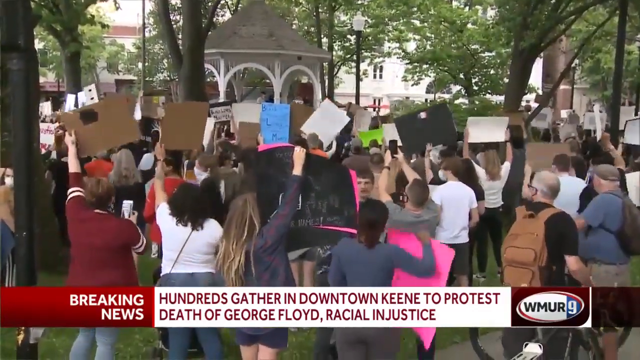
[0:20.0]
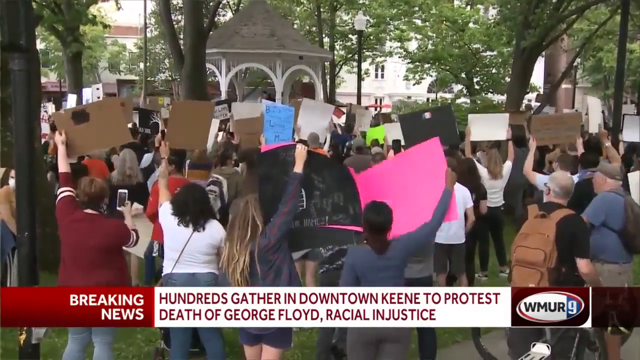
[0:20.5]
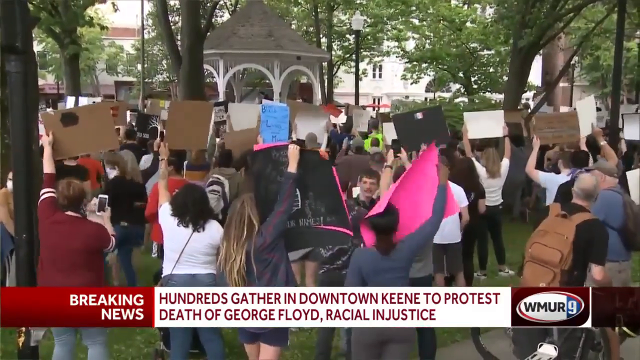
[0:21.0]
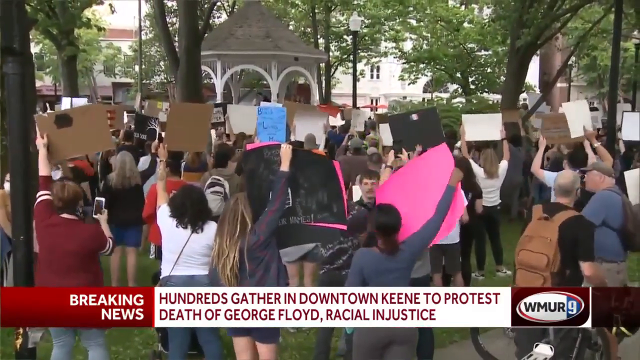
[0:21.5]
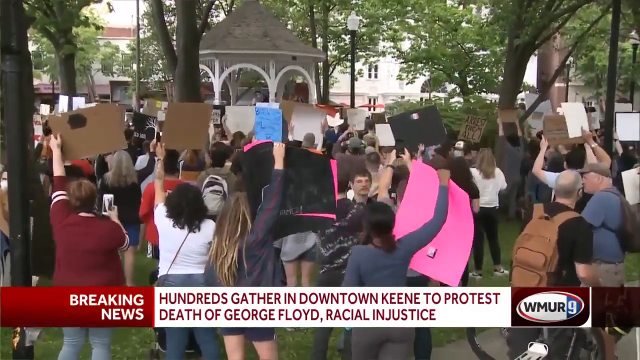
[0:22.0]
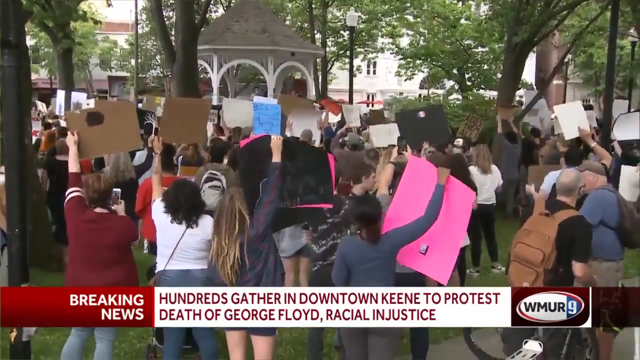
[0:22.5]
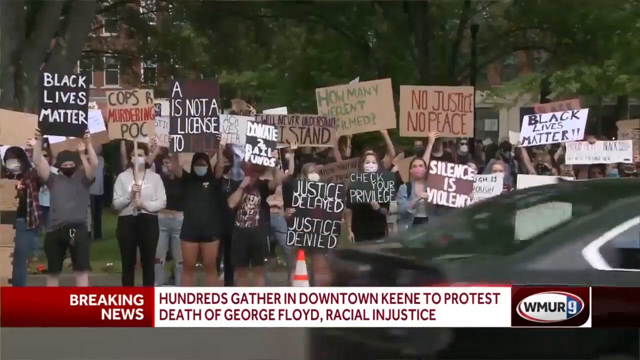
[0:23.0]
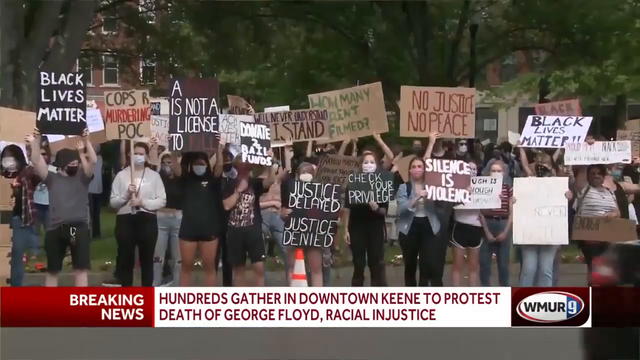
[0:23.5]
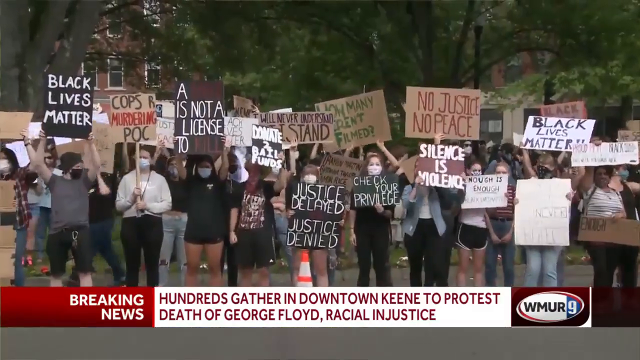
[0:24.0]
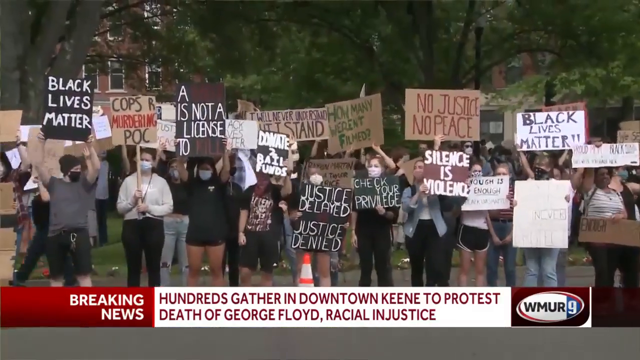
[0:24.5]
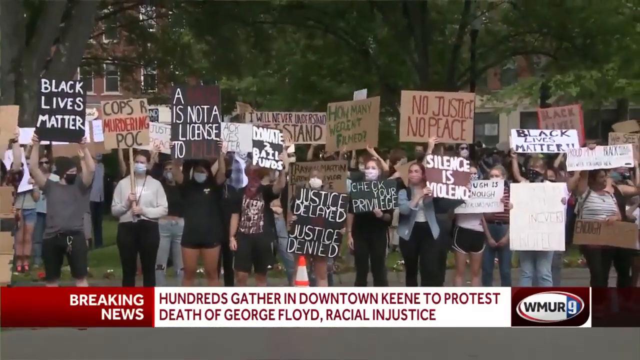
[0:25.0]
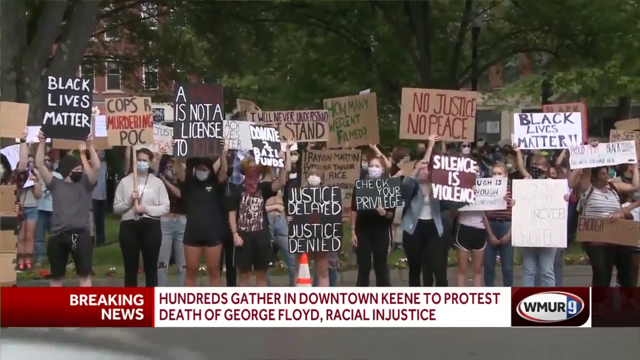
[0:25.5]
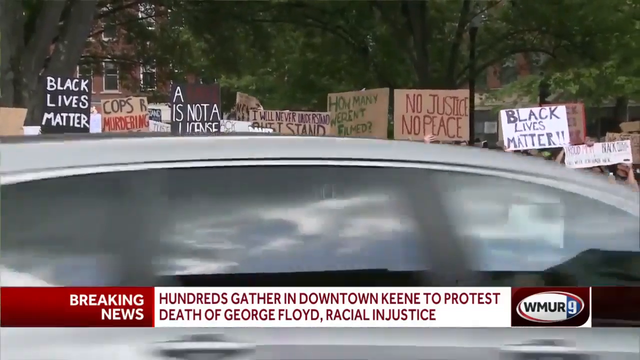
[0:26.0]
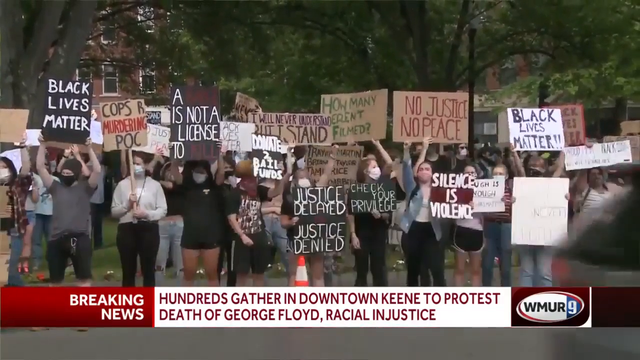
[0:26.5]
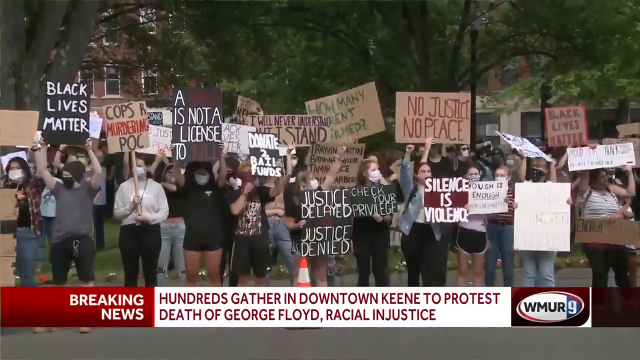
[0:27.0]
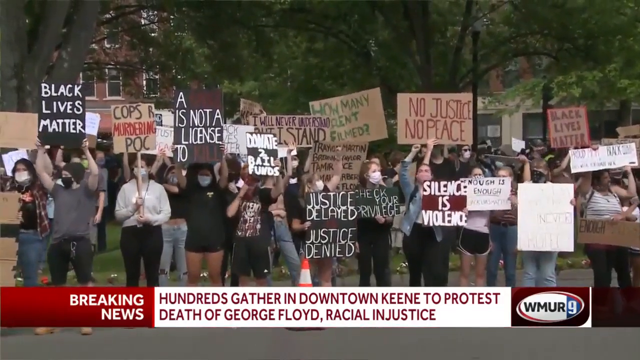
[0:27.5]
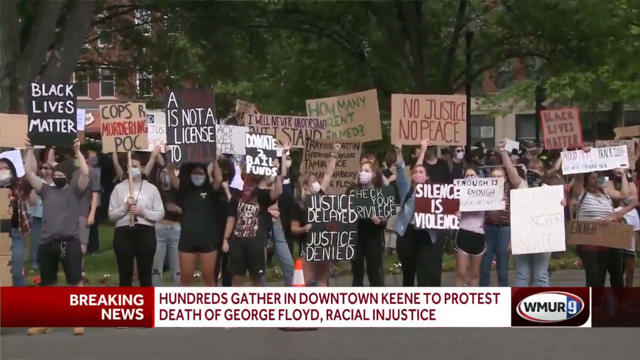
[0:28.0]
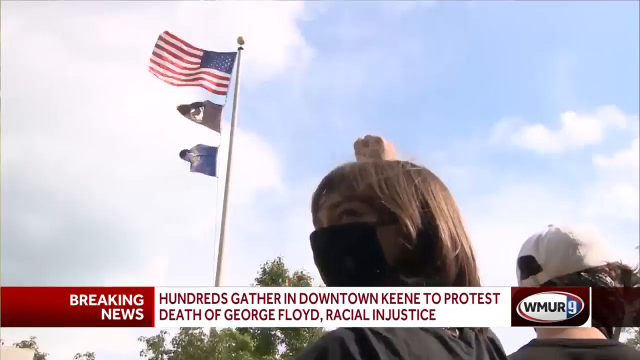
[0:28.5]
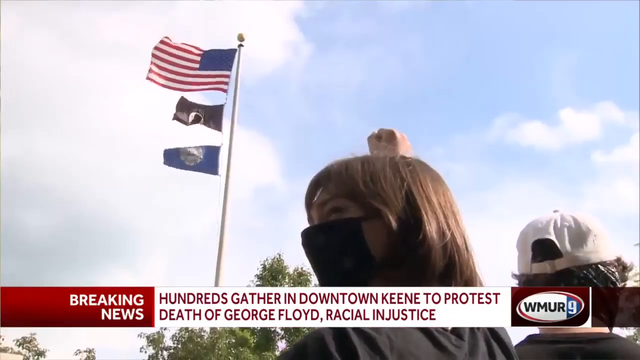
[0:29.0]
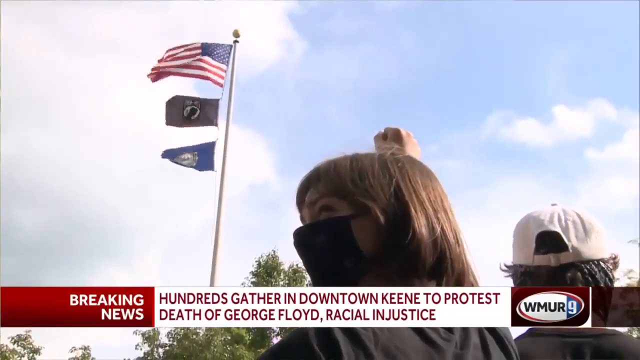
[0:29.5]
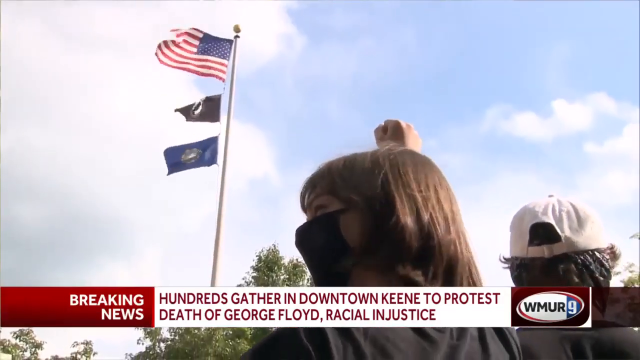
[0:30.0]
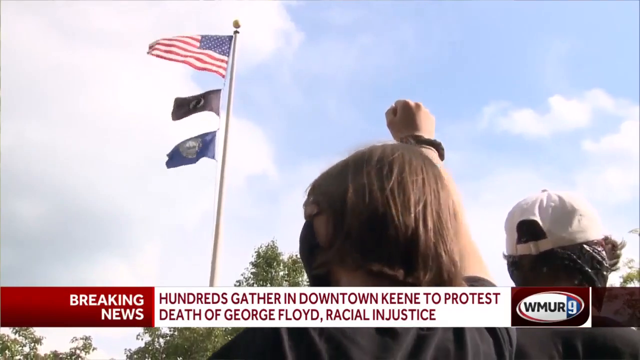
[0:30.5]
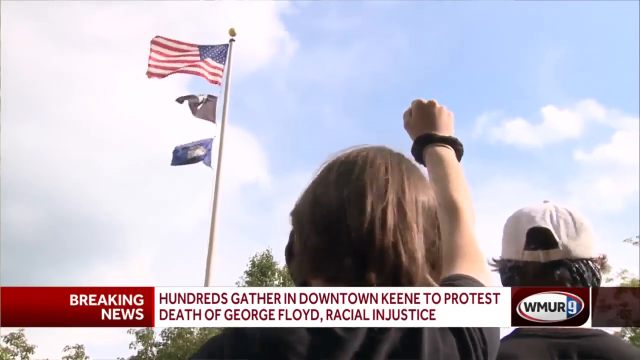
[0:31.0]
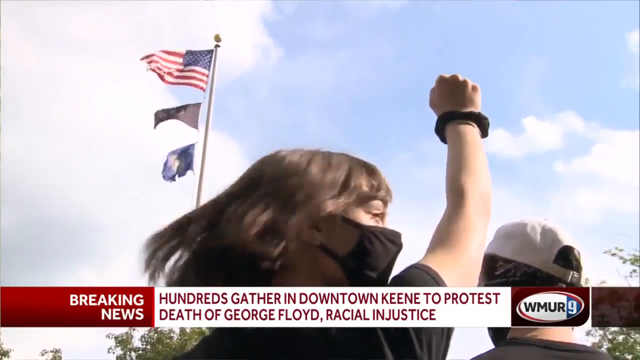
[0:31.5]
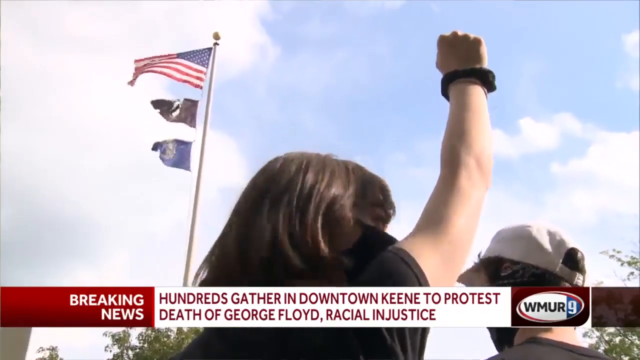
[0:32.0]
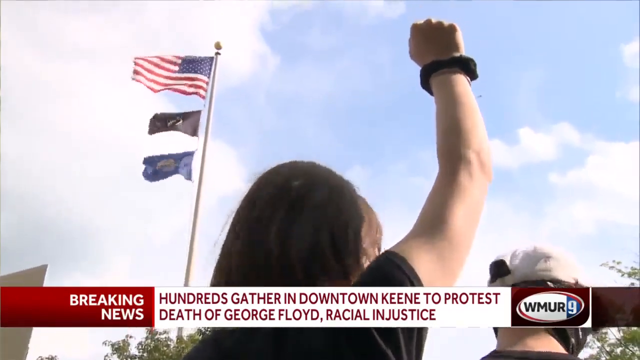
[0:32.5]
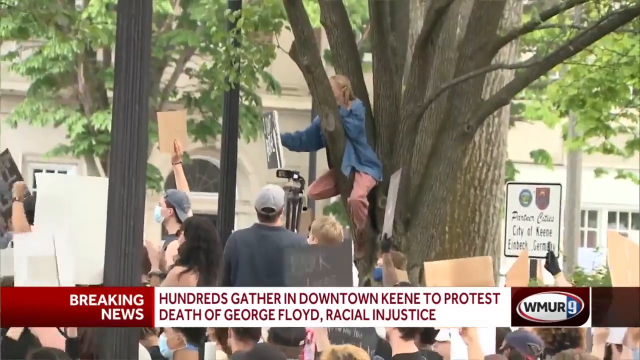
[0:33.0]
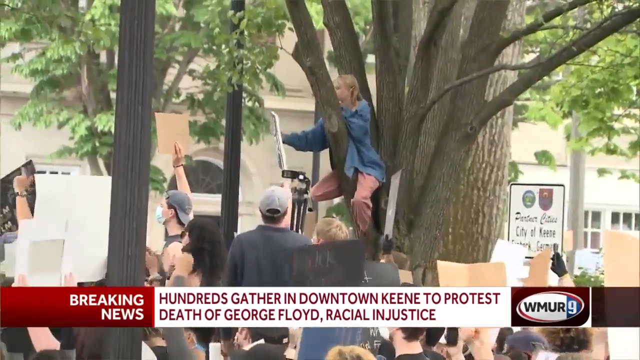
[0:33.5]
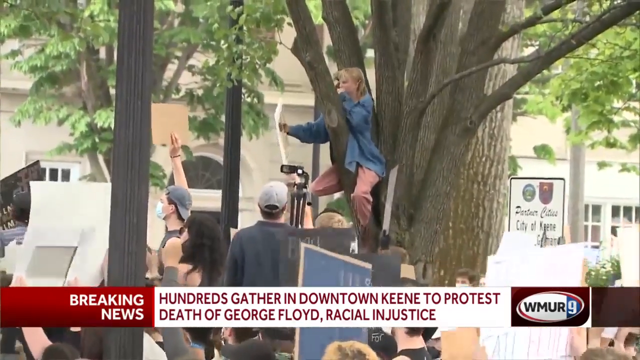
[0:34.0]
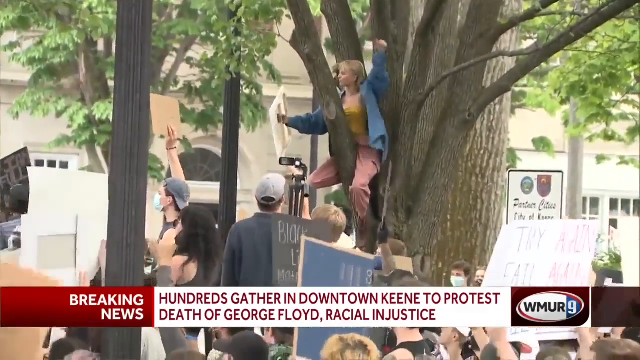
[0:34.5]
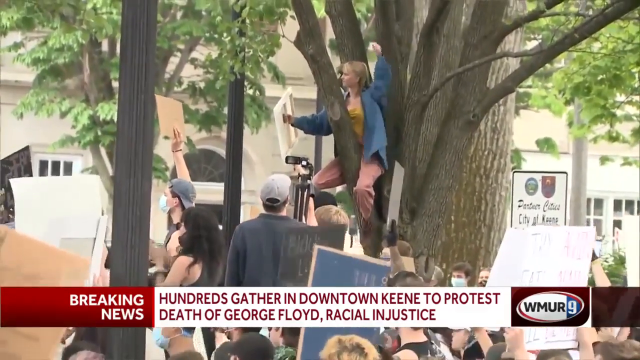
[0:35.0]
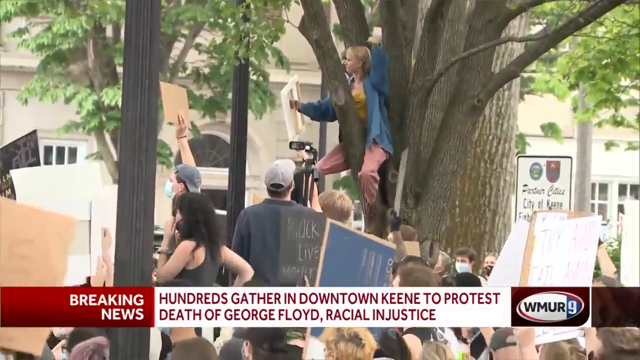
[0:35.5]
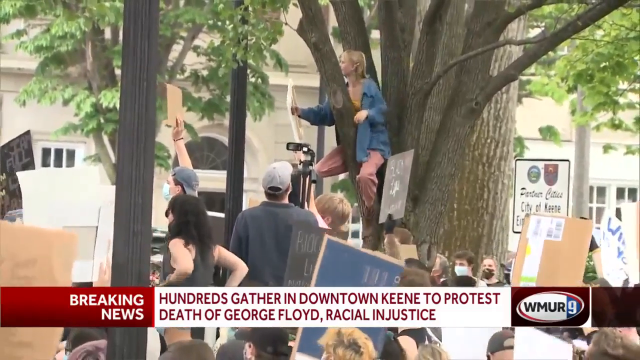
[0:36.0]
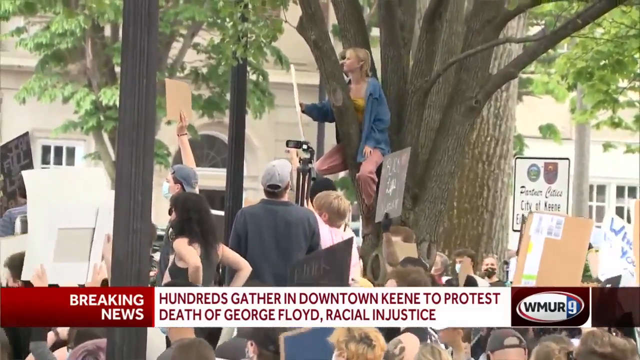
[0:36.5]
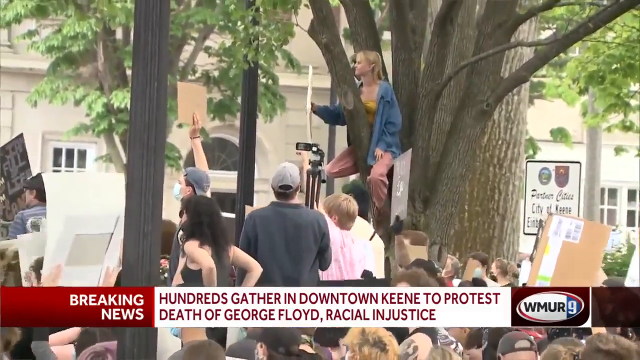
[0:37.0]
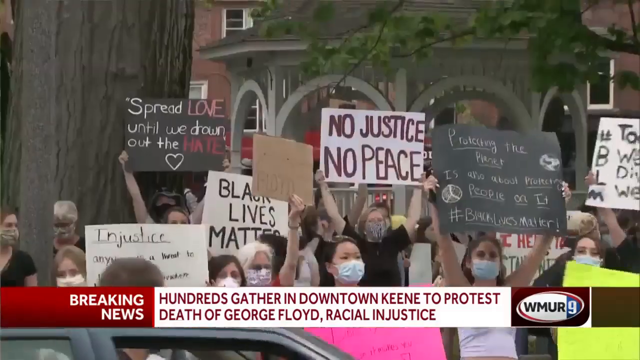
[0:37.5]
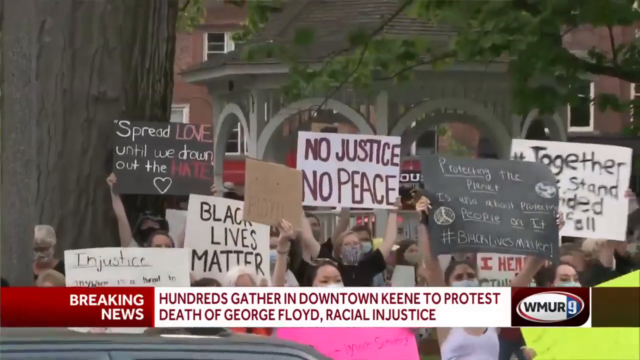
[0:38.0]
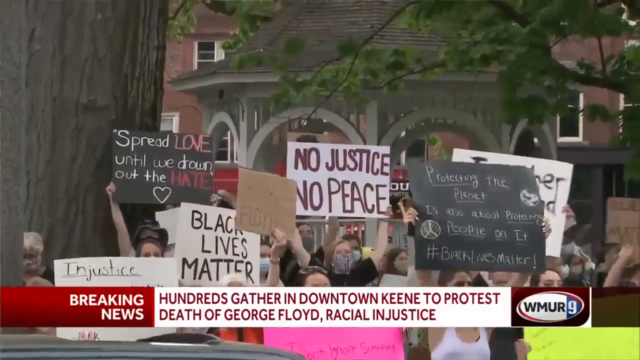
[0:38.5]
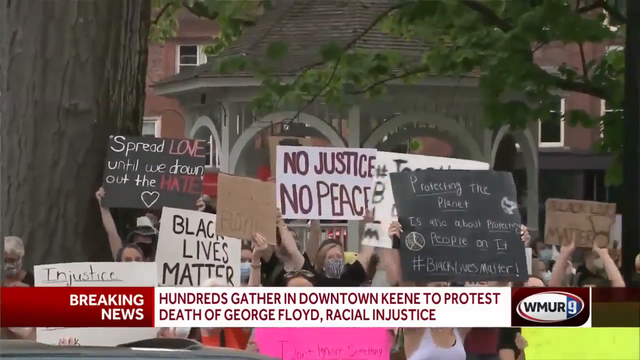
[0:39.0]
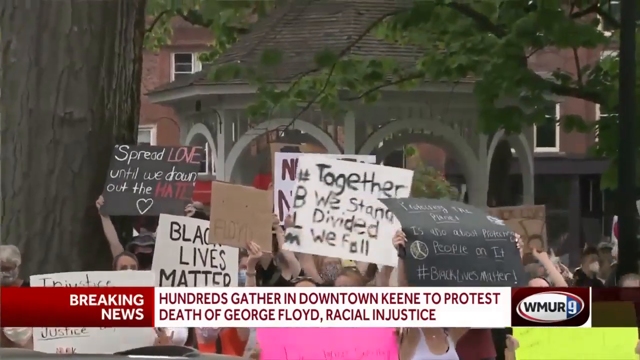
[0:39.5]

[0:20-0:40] On-screen text about the protest in King says "came to protest death of George Floyd, racial injustice." The protesters' messages include "no justice, no peace," "not a license to kill," "Black Lives Matter," "say you stand with Floyd," "justice delayed, justice denied" and "silence is violence." Many white people are there, standing by for Black Lives Matter.